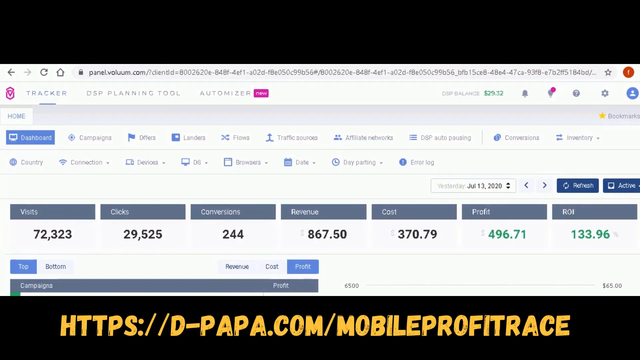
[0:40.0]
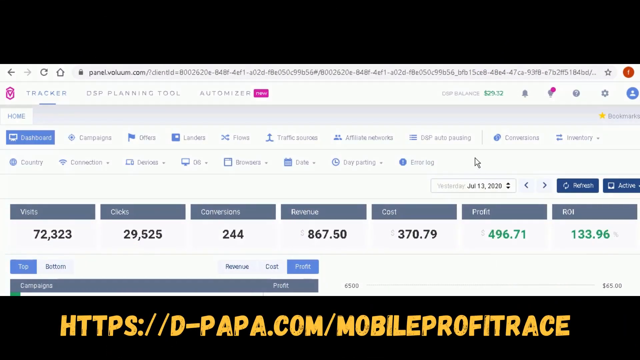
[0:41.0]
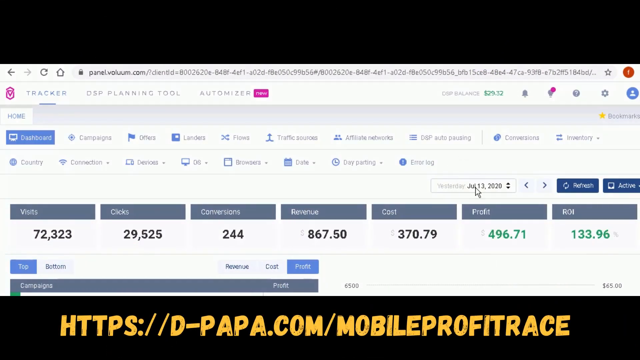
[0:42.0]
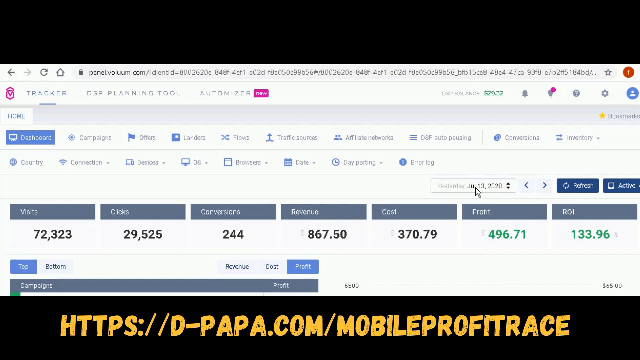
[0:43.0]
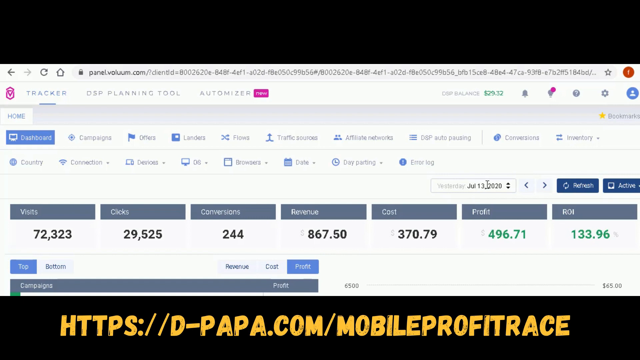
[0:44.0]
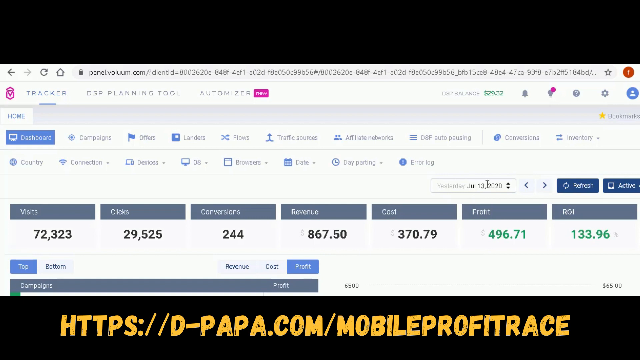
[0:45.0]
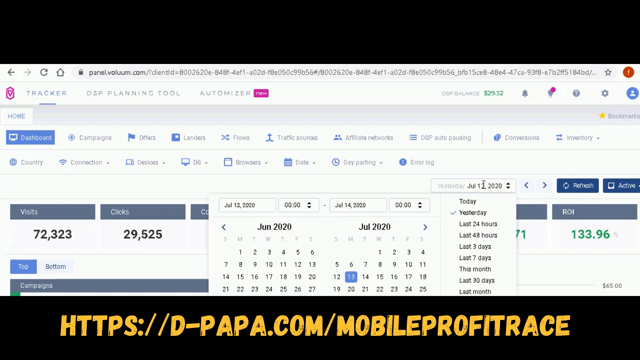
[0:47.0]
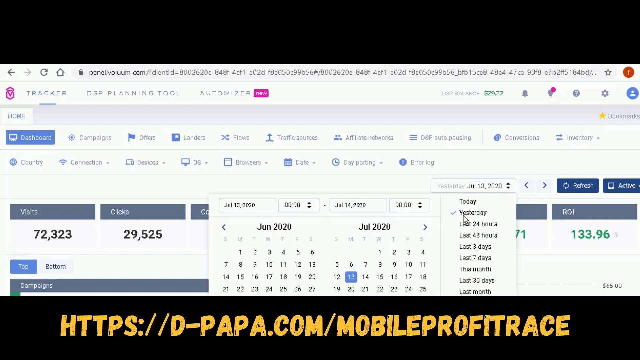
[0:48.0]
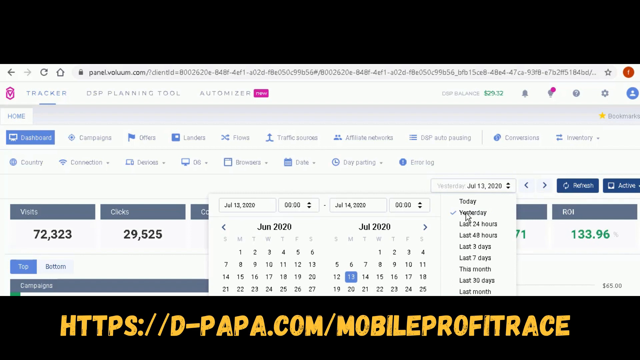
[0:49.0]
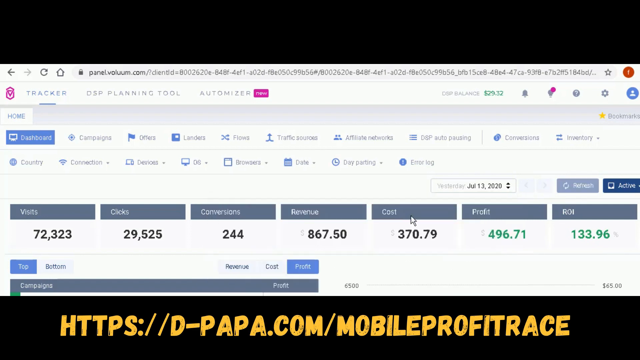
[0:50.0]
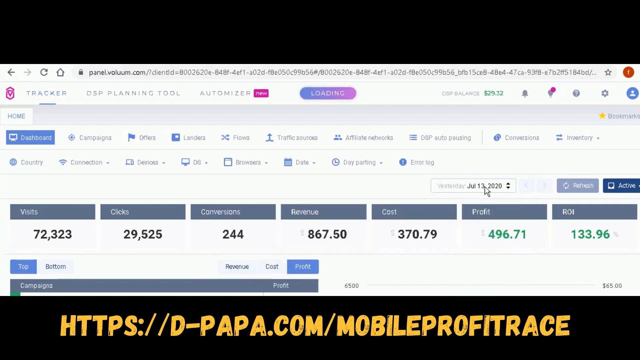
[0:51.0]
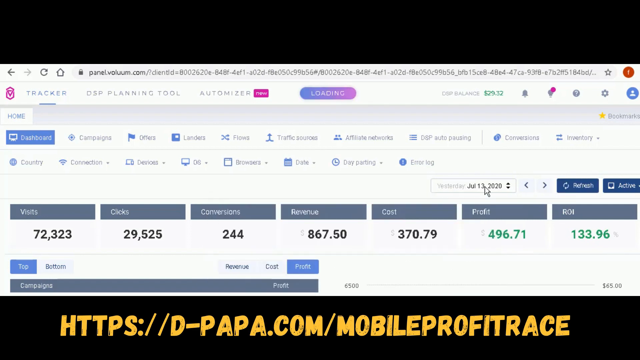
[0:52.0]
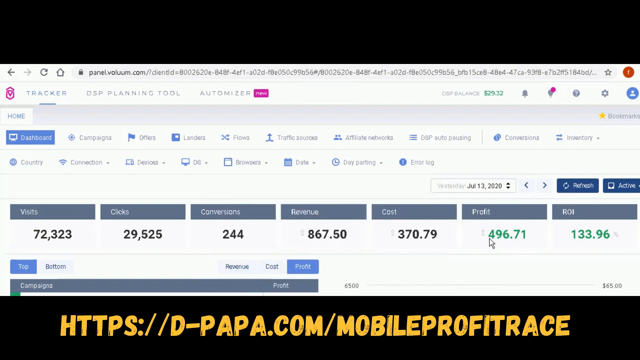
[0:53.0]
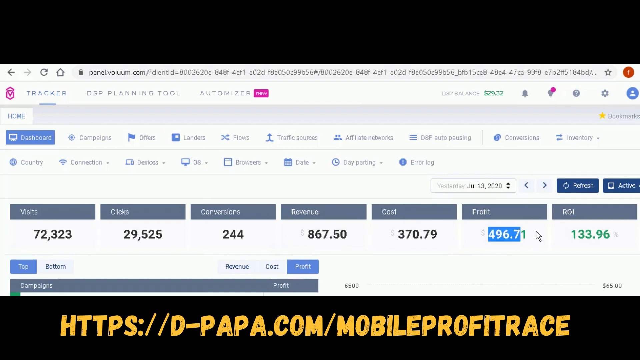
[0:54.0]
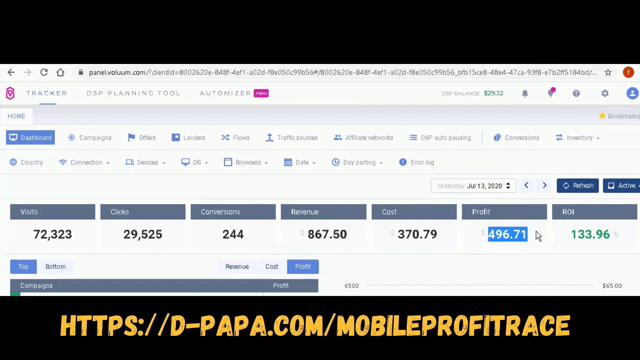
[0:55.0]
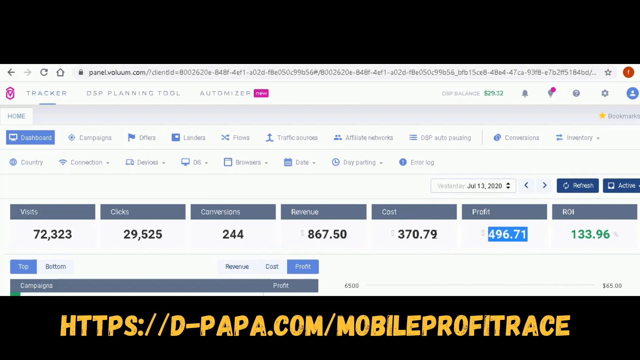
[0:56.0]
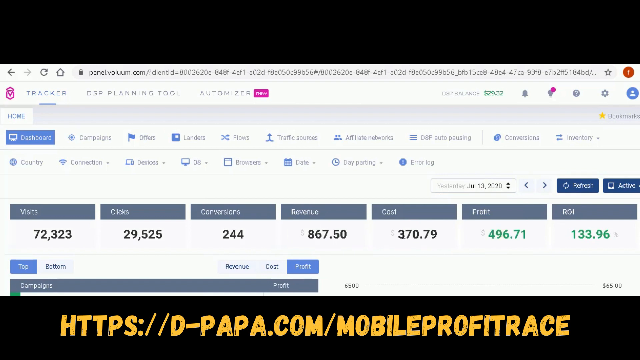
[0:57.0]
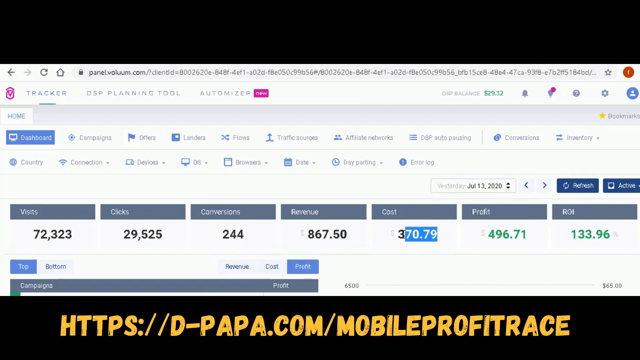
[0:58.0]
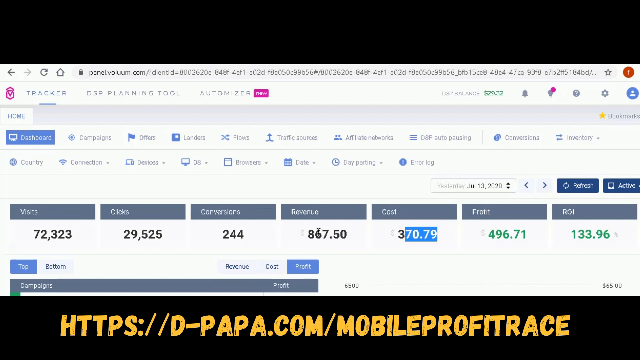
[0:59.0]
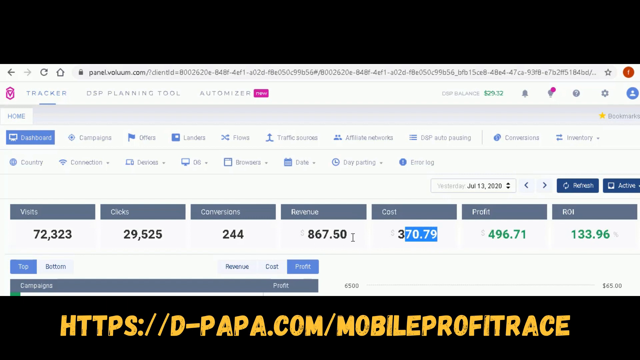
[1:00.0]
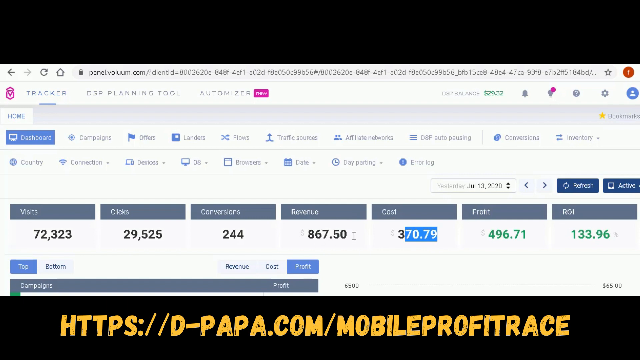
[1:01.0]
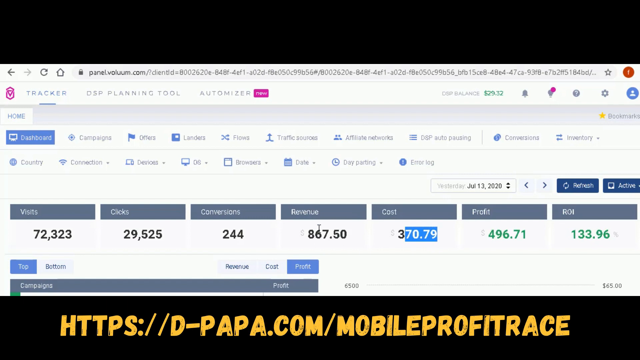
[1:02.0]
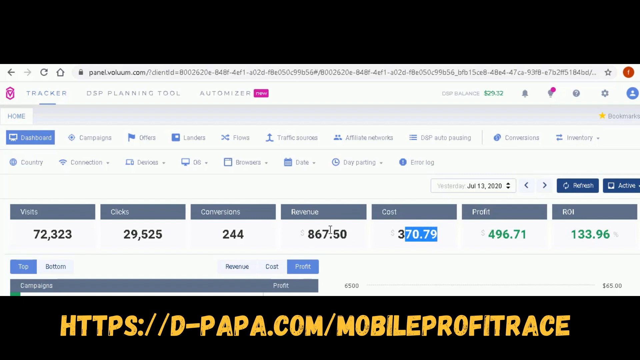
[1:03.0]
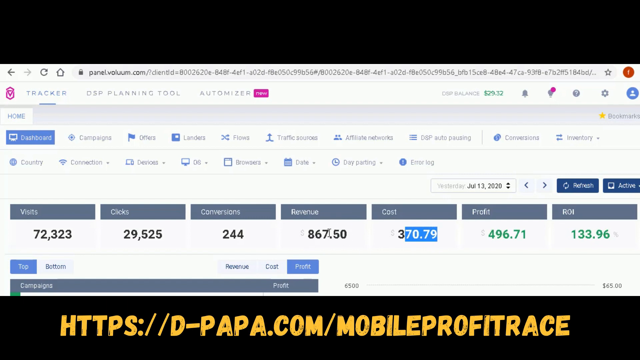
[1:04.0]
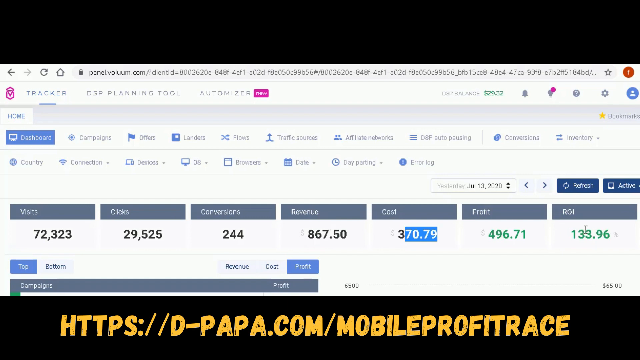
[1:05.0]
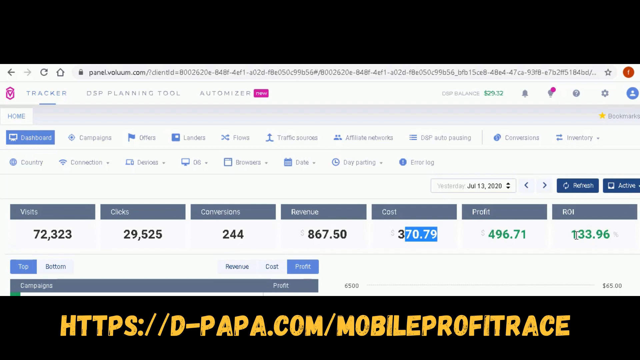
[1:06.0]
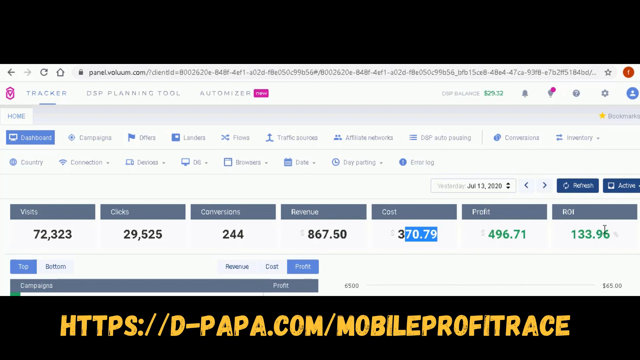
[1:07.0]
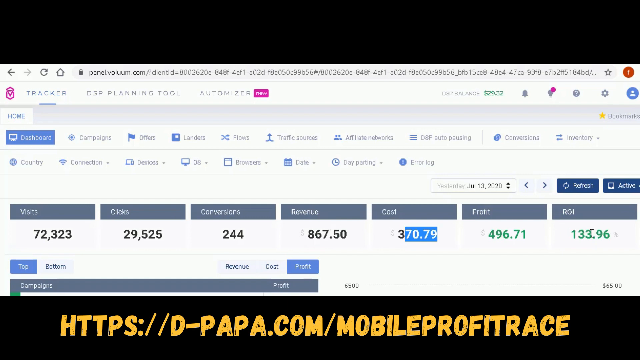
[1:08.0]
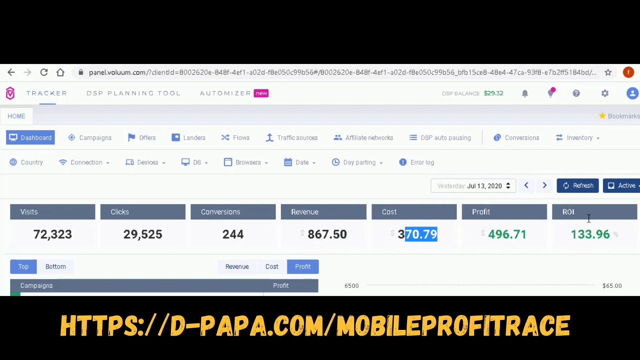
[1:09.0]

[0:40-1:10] Online software is shown with a web address at the very top. Underneath are three tabs, "Tracker", "DSP Planning Tool" and "Atomizer", with a purple "new" icon after Atomizer. Below is a Home tab, and under that many menus: a line of 10 buttons and, beneath it, a further eight buttons. Below these is a date range box with forward and back arrows, a refresh button and an active button. Underneath is a dashboard showing visits, conversions, revenue, cost, profit and ROI with their corresponding figures. At the very bottom of the screen is a web address reading "HTTPS://D-PAPA.com/mobile profit race". The cursor hovers over the date selector, and a calendar pops out briefly. The profit figure of $496.71 is then highlighted, followed by the cost figure, with the 70.79 part of that cost highlighted.